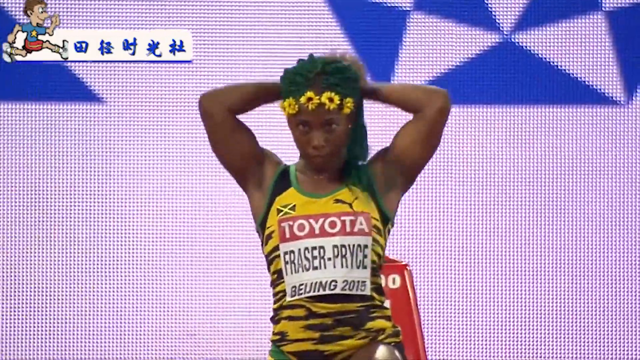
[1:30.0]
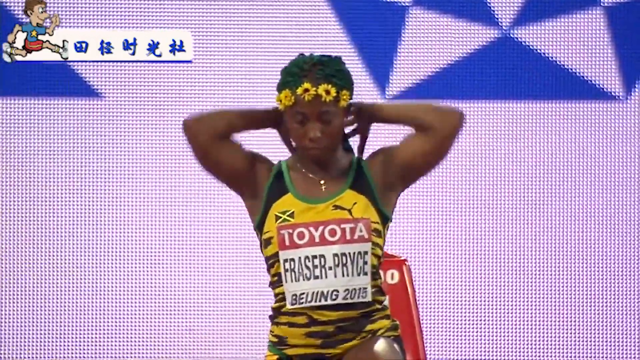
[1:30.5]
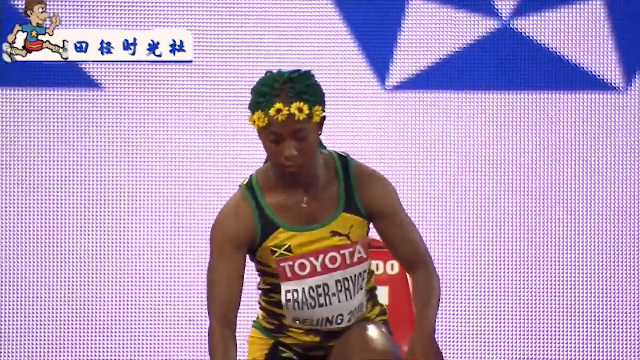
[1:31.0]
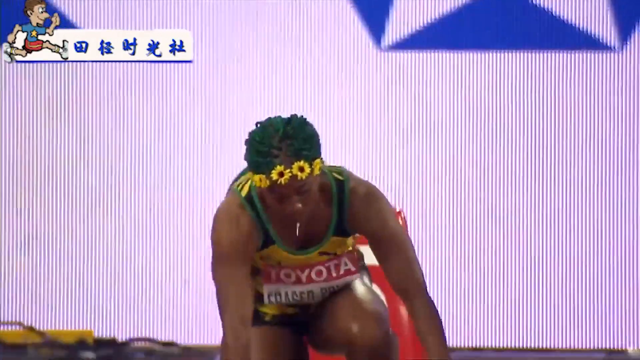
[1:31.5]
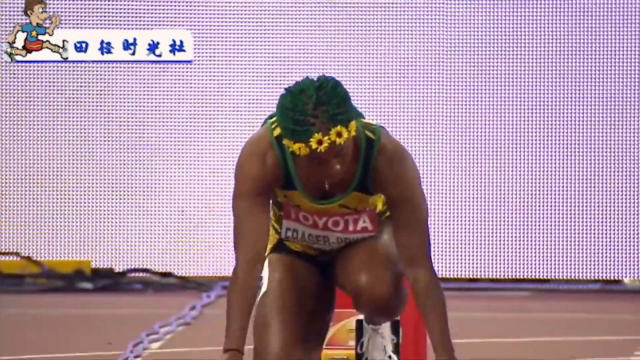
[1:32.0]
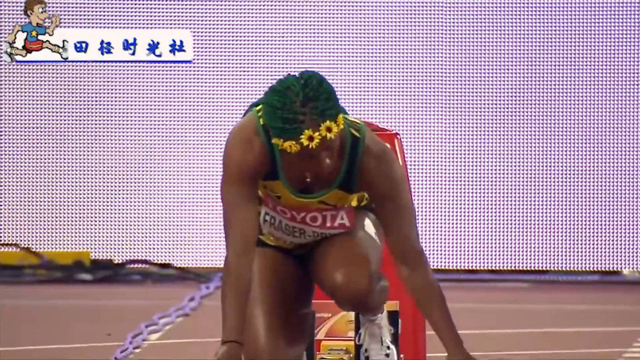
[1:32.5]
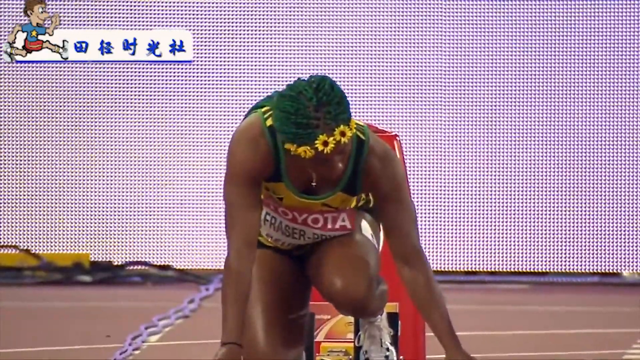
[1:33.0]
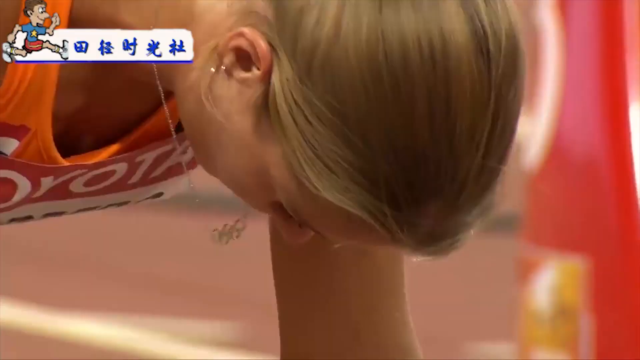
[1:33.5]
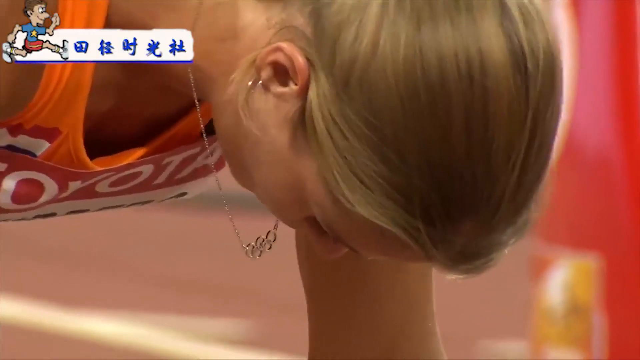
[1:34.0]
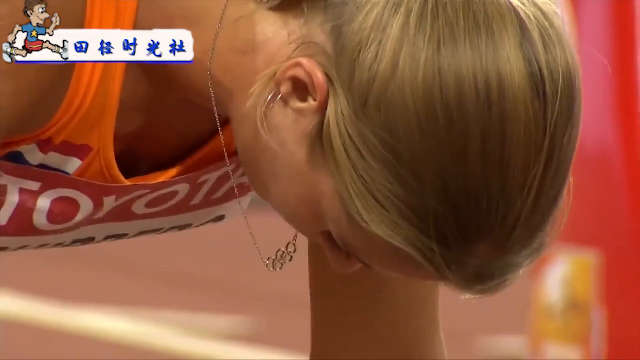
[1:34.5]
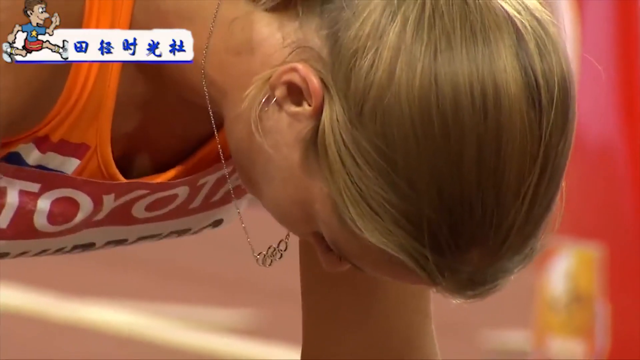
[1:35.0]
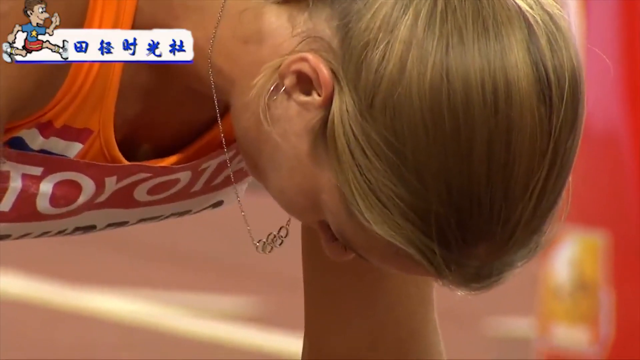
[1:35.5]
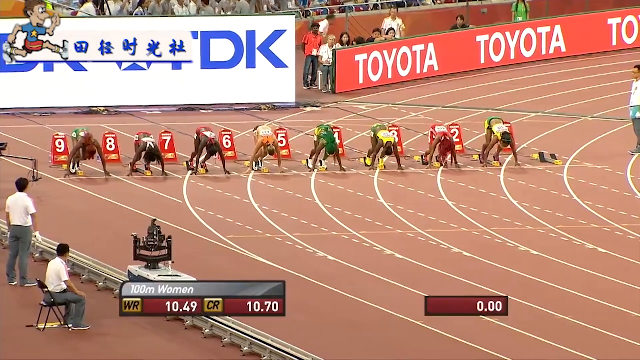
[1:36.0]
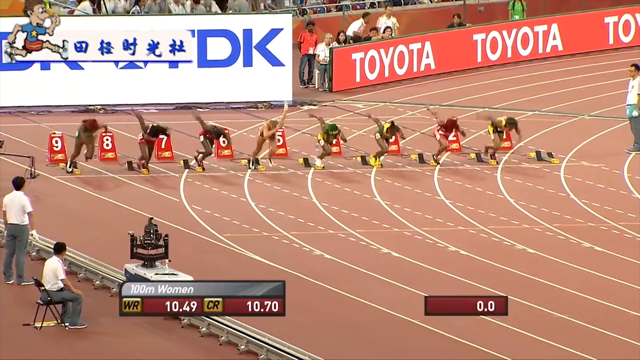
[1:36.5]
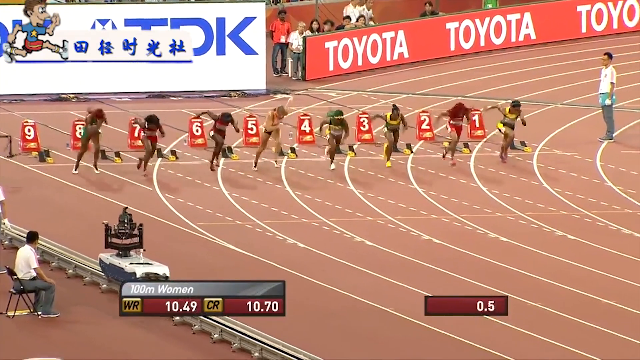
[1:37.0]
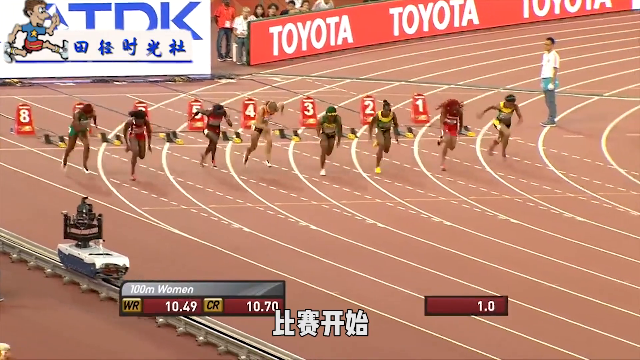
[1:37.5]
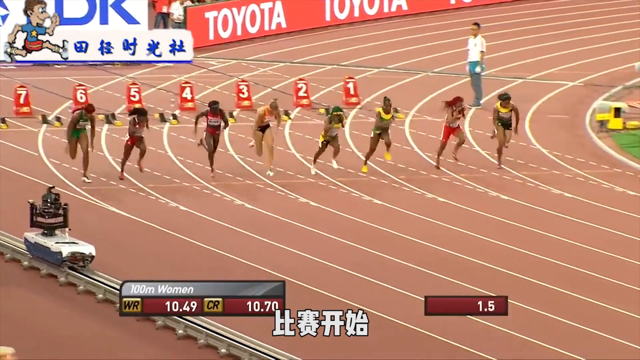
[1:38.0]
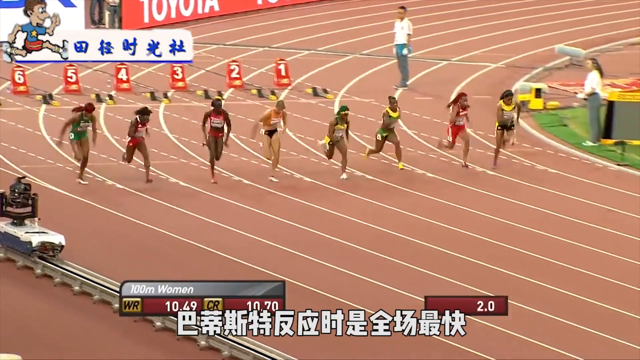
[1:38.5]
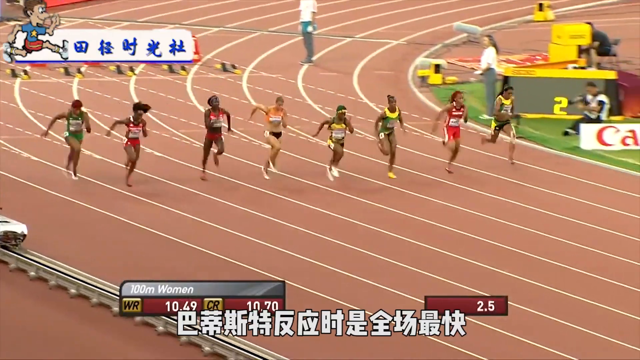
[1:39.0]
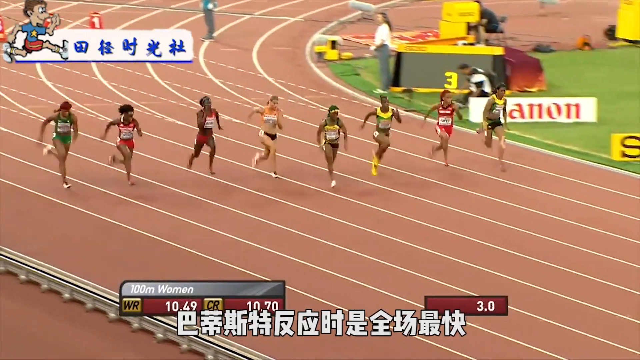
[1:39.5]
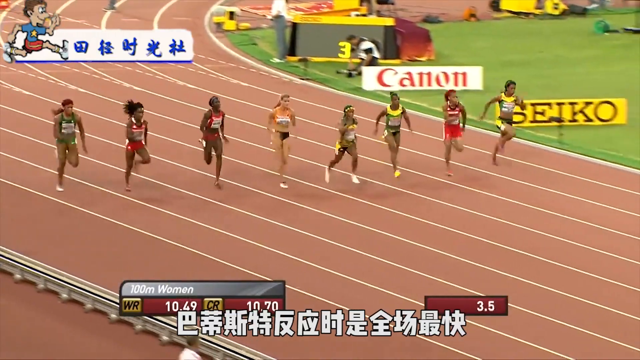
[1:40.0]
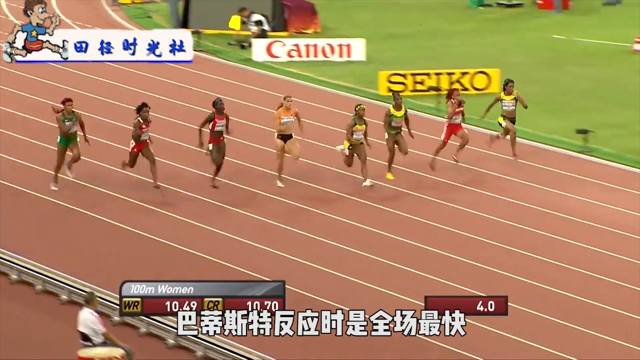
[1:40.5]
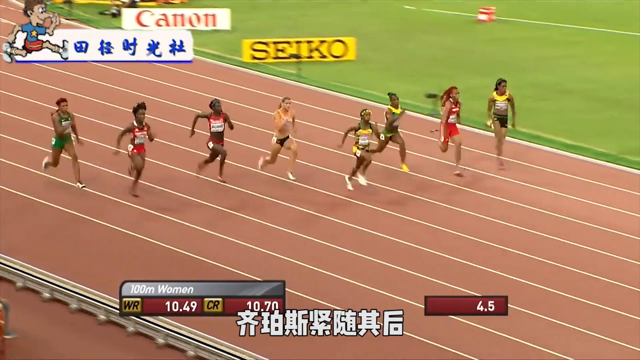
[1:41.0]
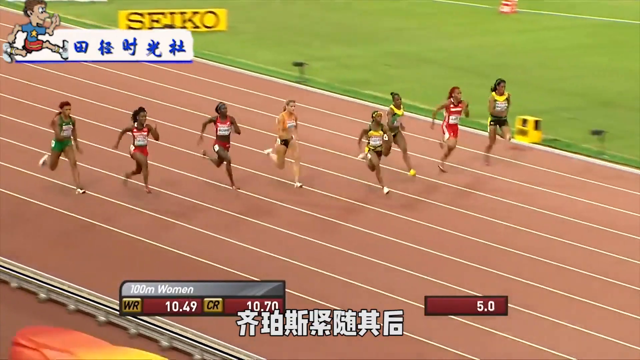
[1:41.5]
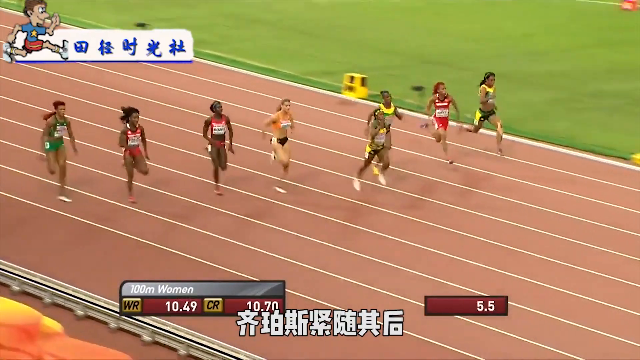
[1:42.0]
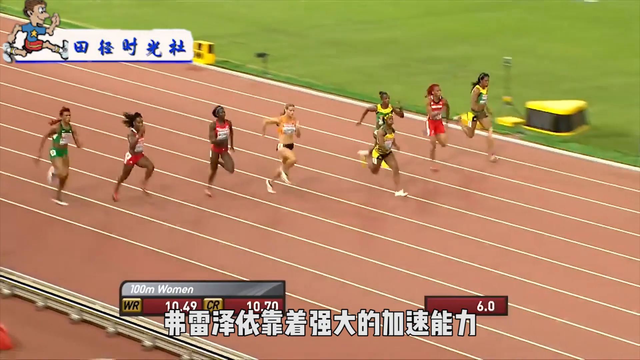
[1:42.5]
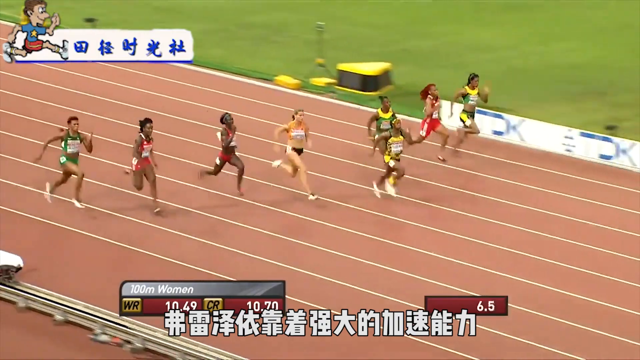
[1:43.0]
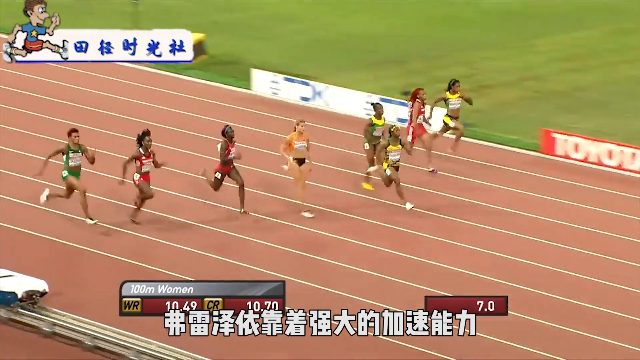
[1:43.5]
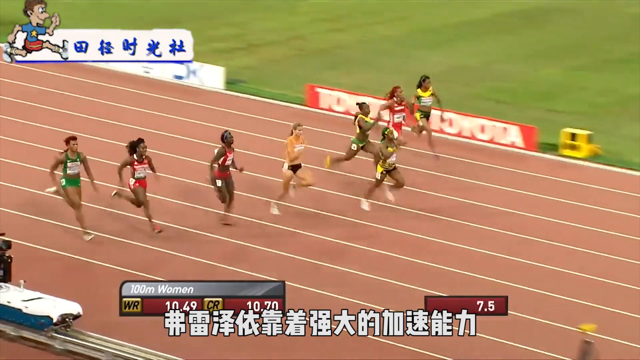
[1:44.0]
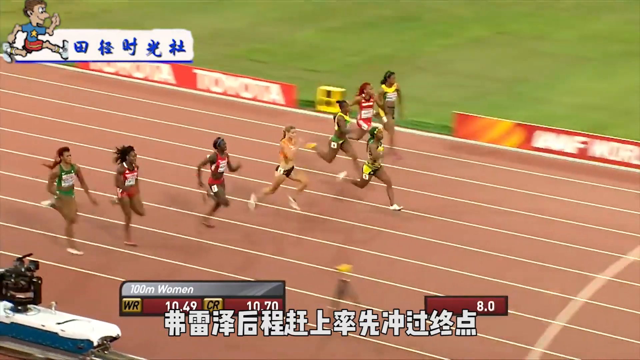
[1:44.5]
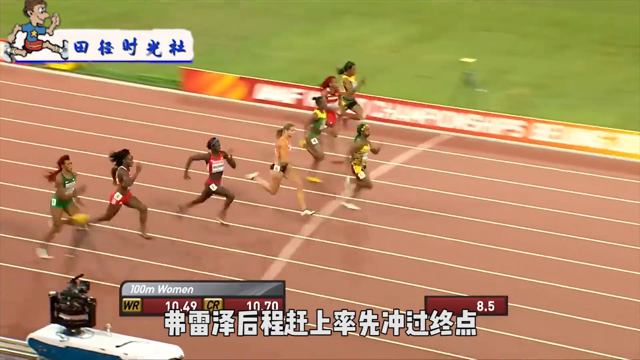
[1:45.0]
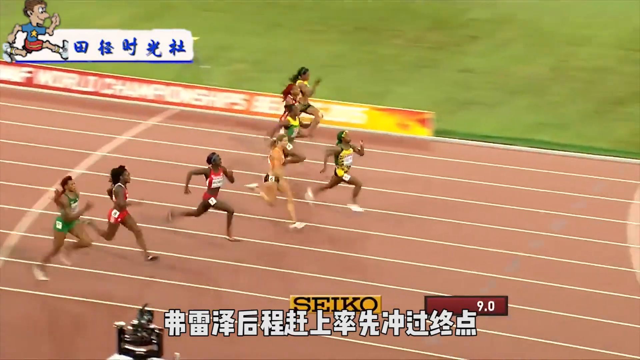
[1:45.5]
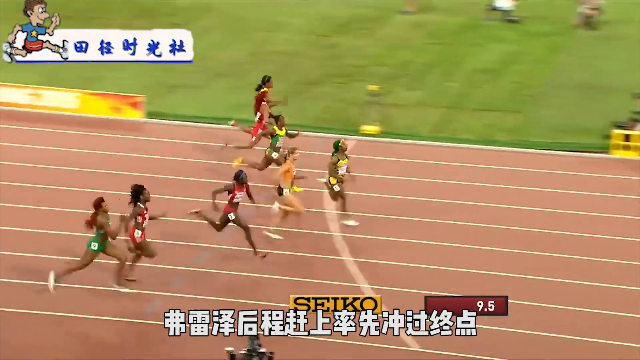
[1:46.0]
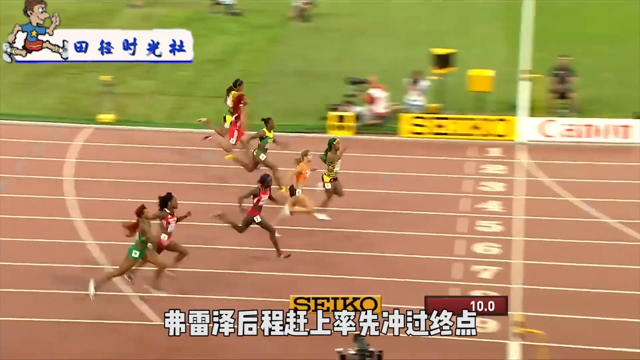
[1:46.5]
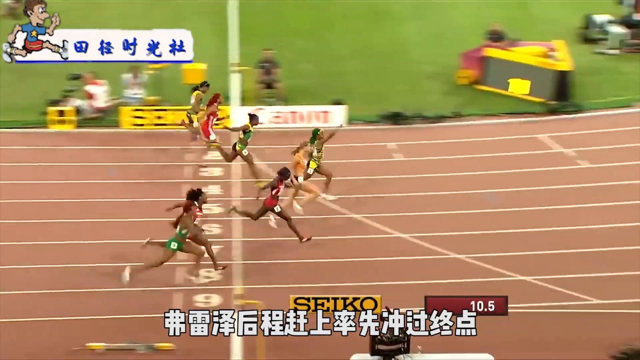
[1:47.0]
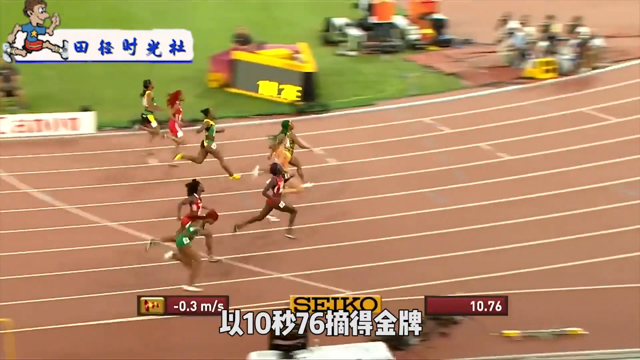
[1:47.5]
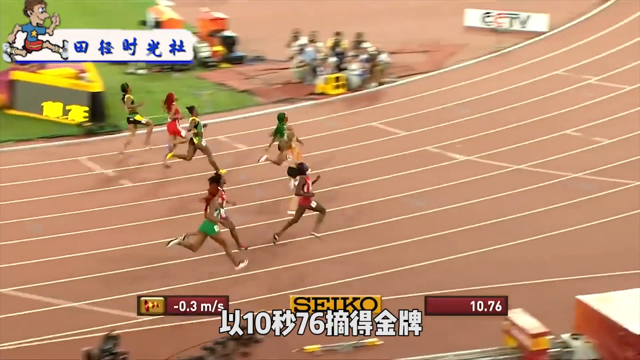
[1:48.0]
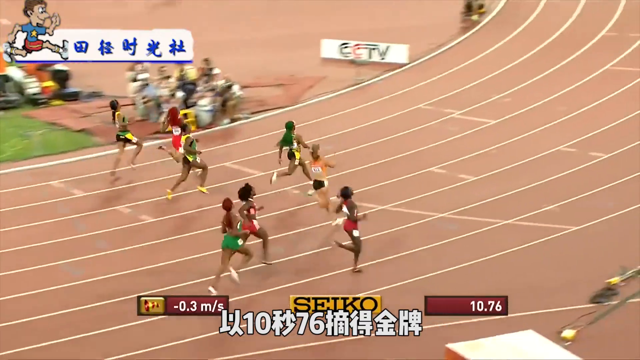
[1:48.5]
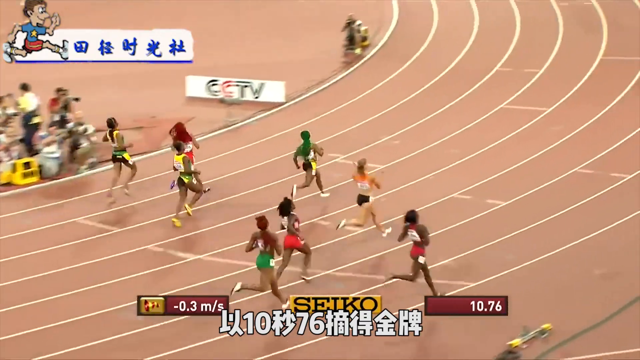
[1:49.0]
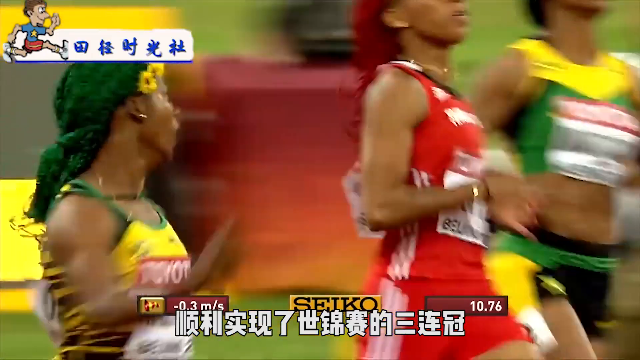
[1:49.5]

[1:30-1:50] The race is run from beginning to end and goes fairly quickly, probably the 100 meter sprint. A close-up shows the words "Beijing 2015" at the bottom of the number and name plates the competitors wear across their bodies. The race starts out very close, but the competitor in the middle gets out to a small lead and finishes first, with second place likely going to the dark-haired blonde woman. The race is extremely close.